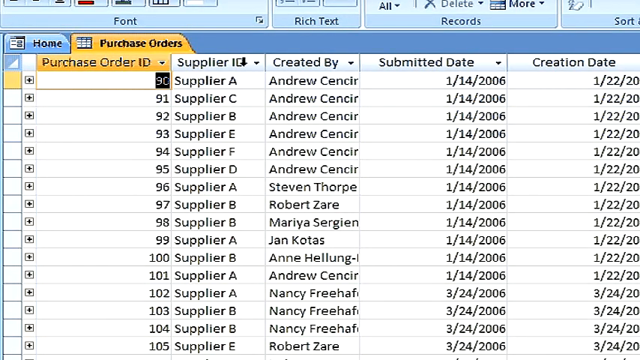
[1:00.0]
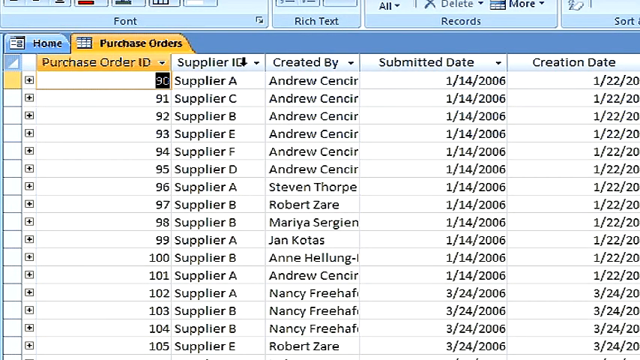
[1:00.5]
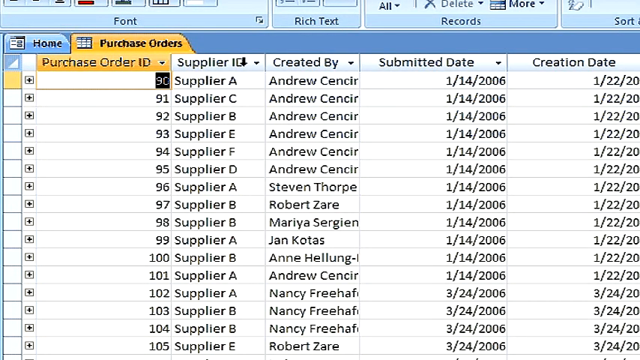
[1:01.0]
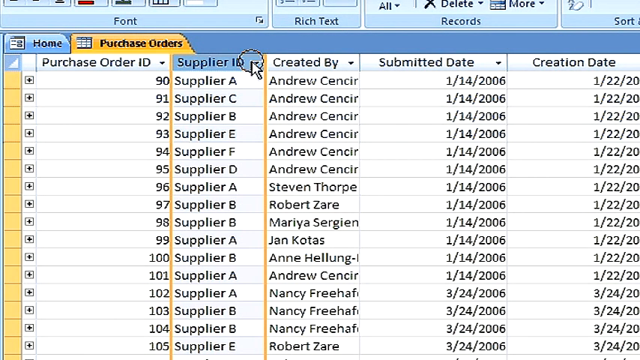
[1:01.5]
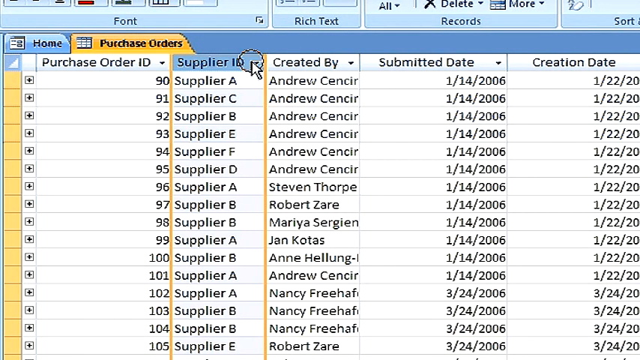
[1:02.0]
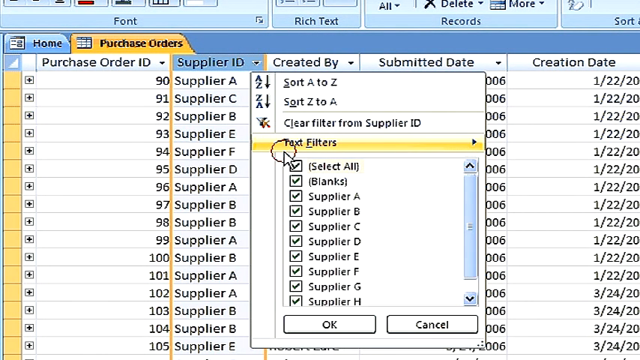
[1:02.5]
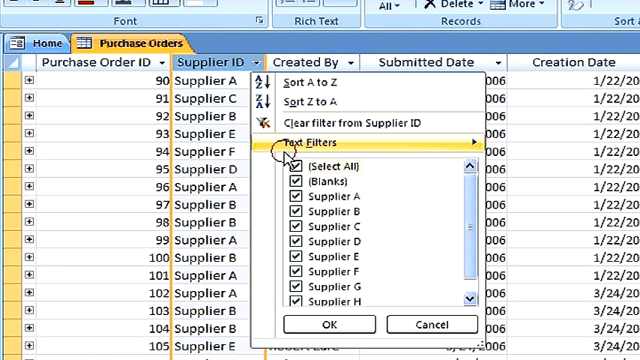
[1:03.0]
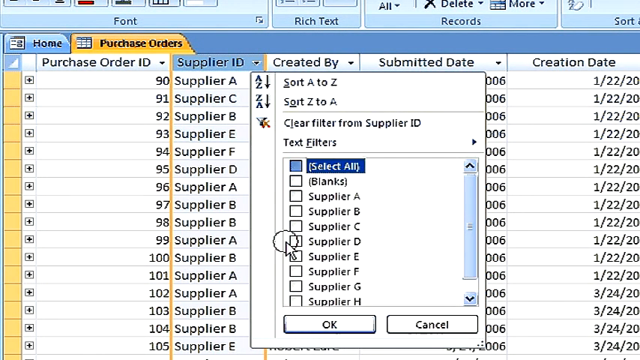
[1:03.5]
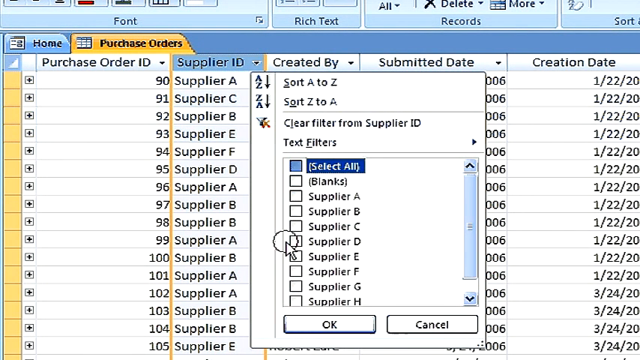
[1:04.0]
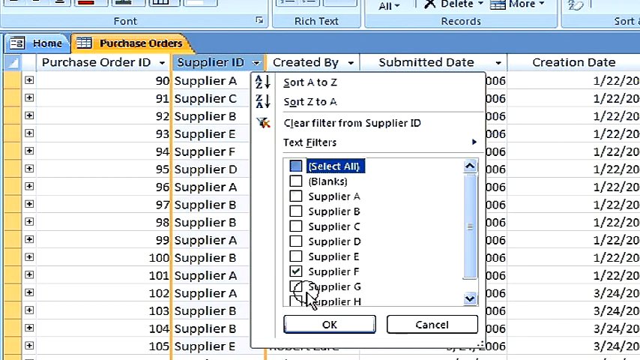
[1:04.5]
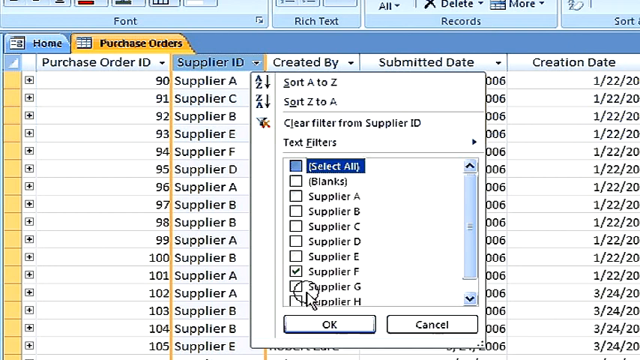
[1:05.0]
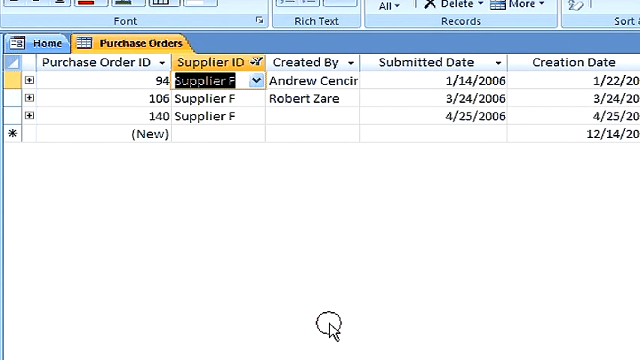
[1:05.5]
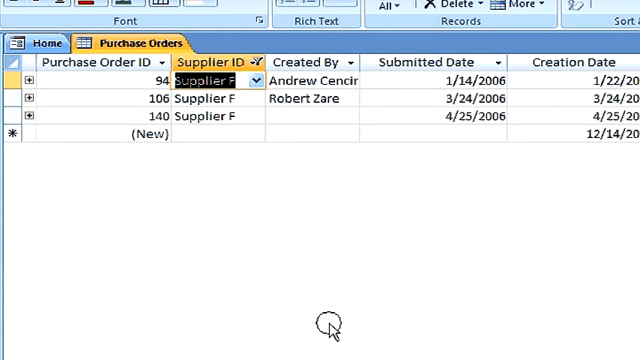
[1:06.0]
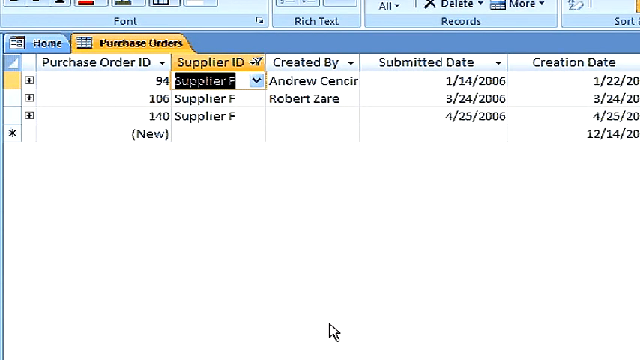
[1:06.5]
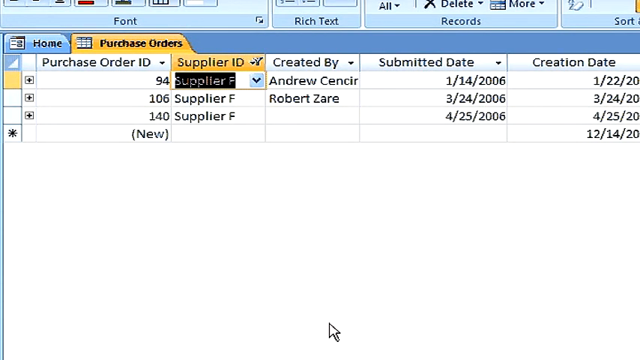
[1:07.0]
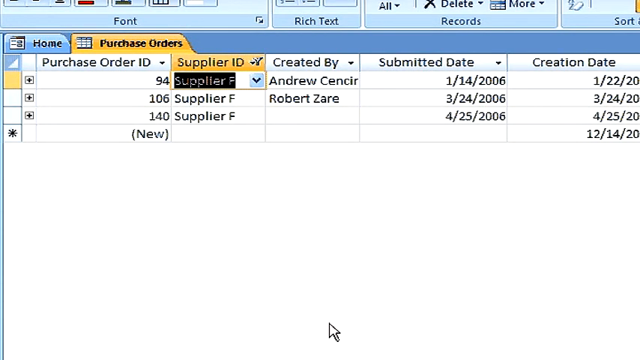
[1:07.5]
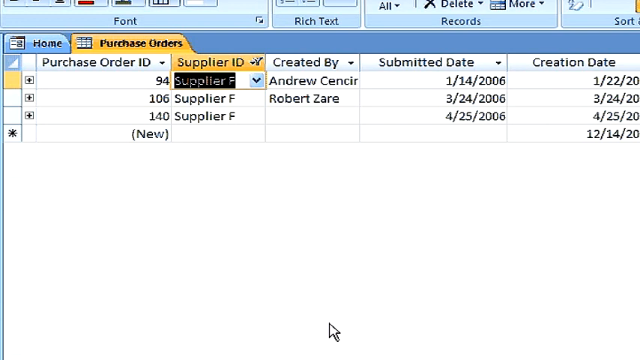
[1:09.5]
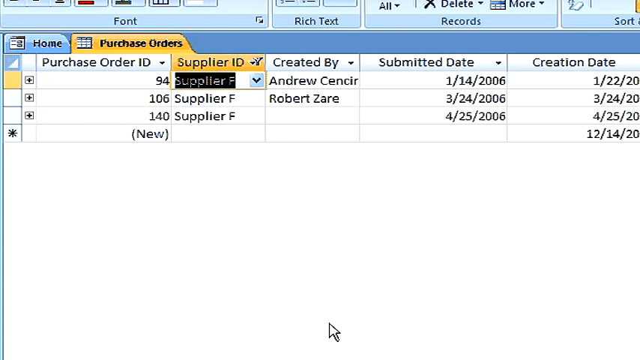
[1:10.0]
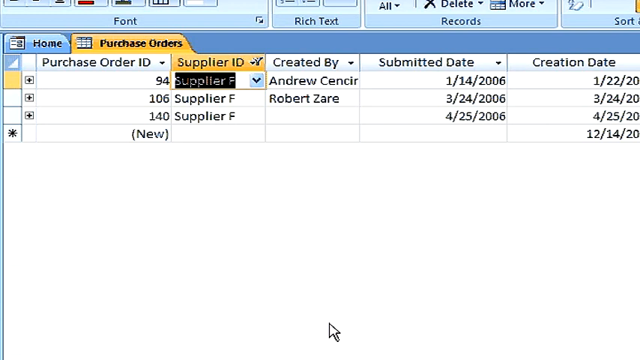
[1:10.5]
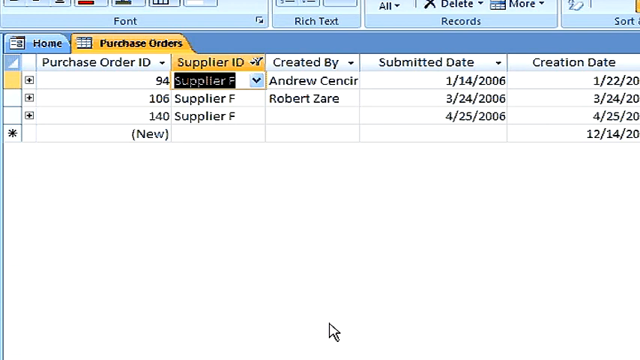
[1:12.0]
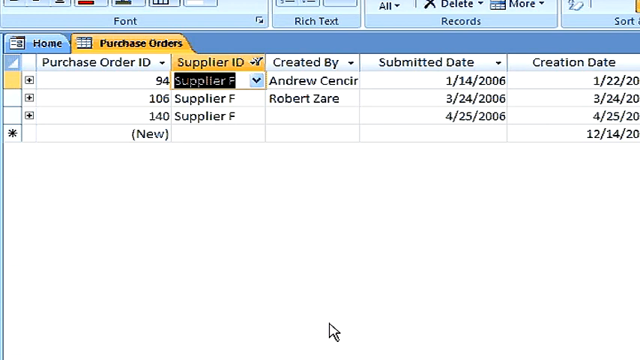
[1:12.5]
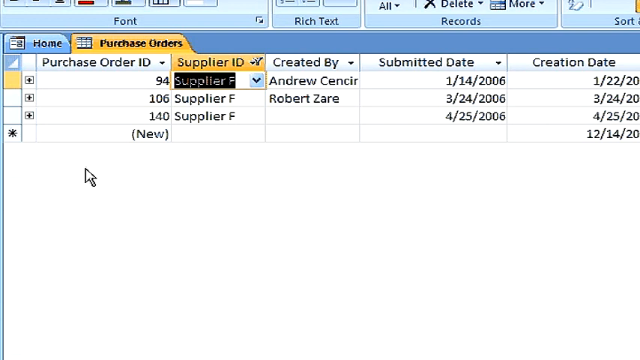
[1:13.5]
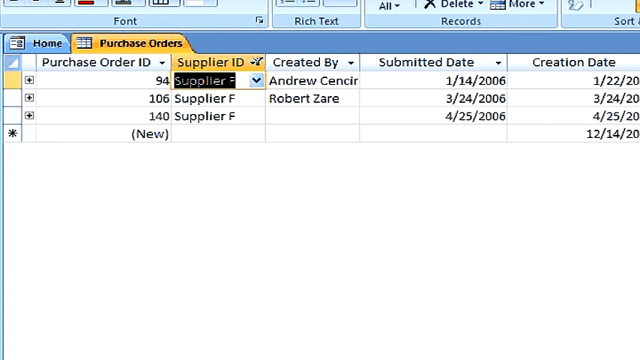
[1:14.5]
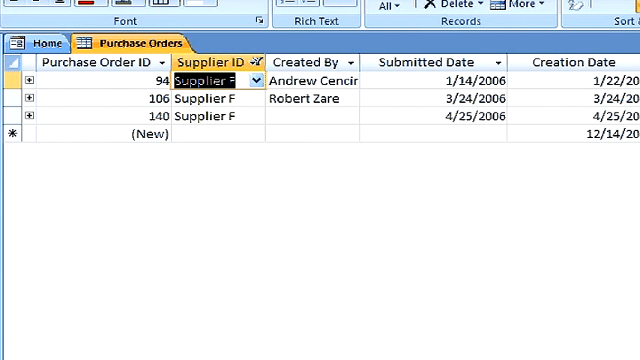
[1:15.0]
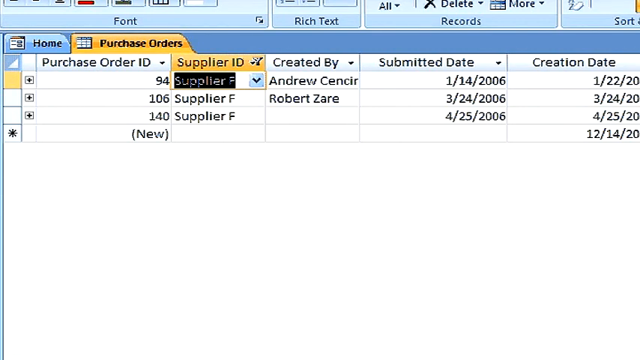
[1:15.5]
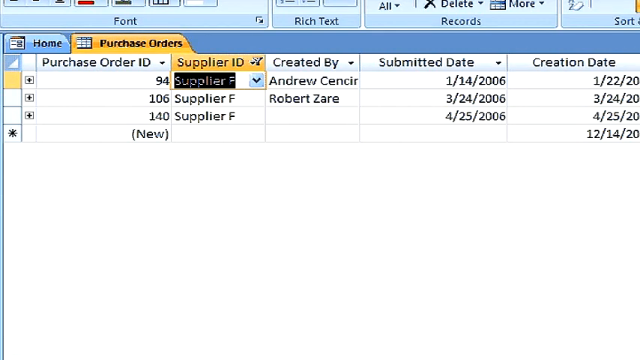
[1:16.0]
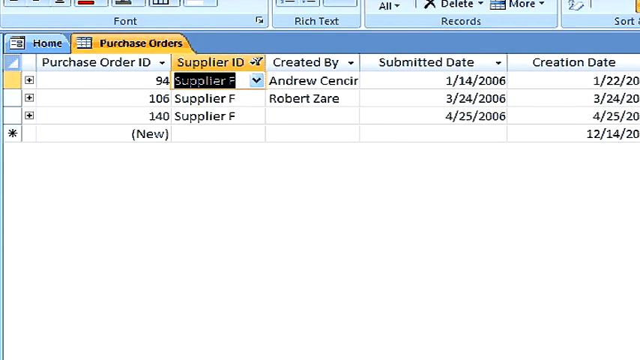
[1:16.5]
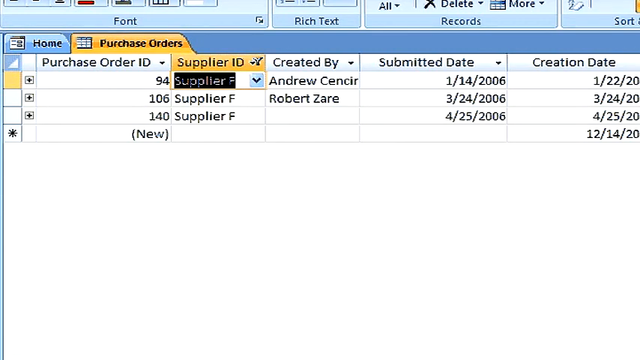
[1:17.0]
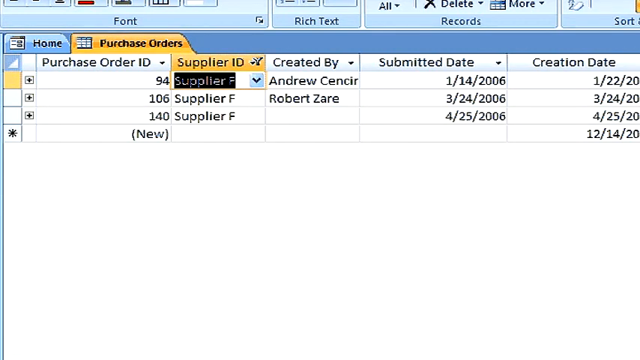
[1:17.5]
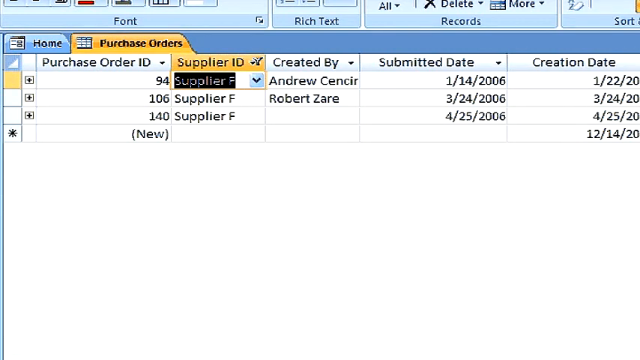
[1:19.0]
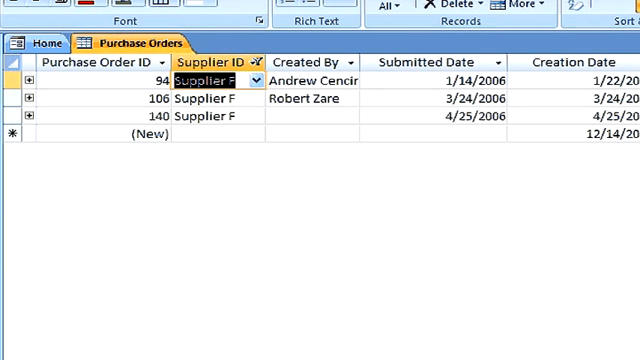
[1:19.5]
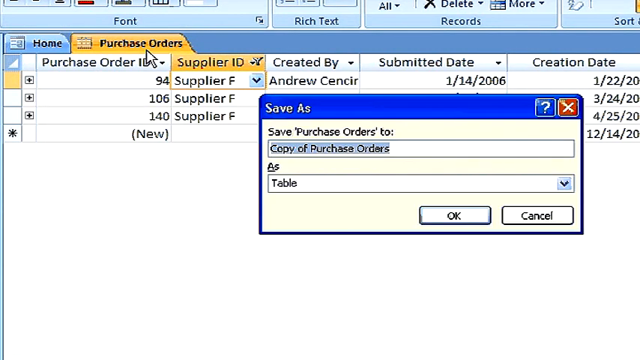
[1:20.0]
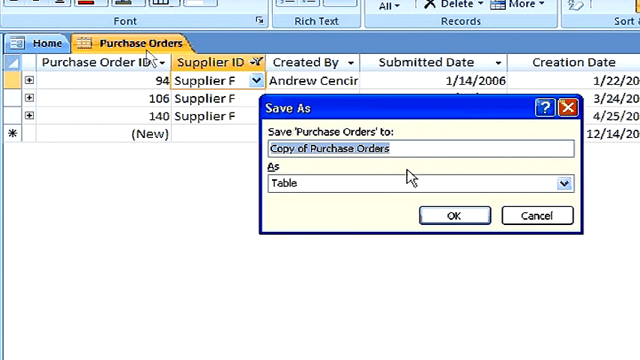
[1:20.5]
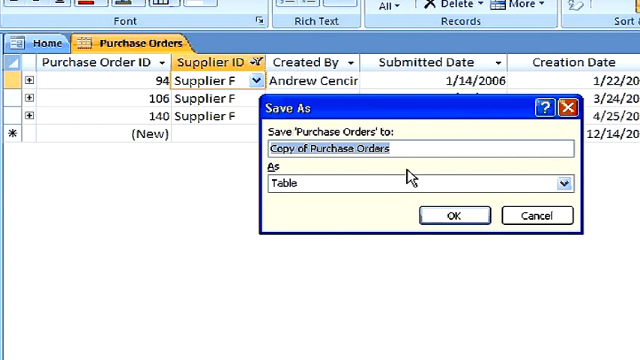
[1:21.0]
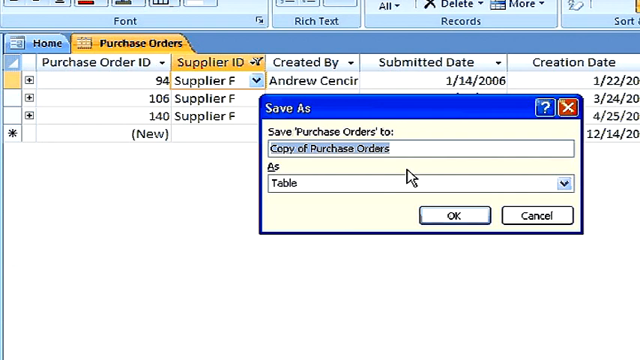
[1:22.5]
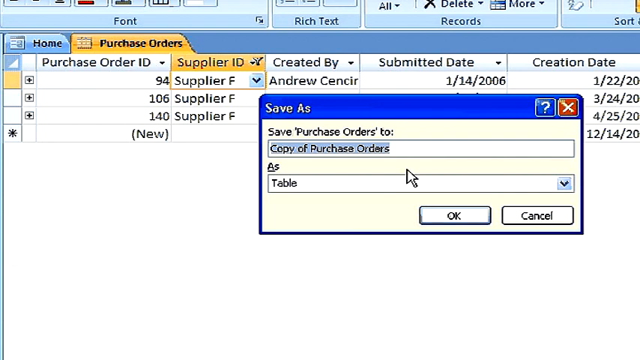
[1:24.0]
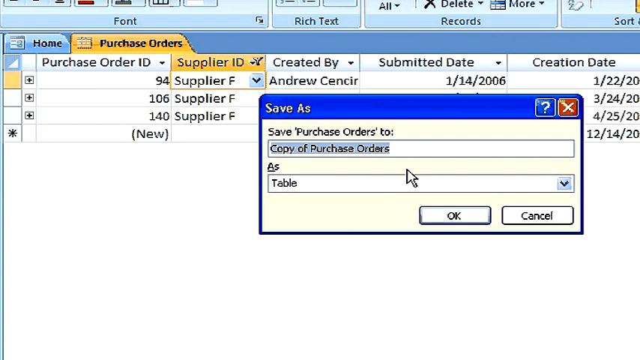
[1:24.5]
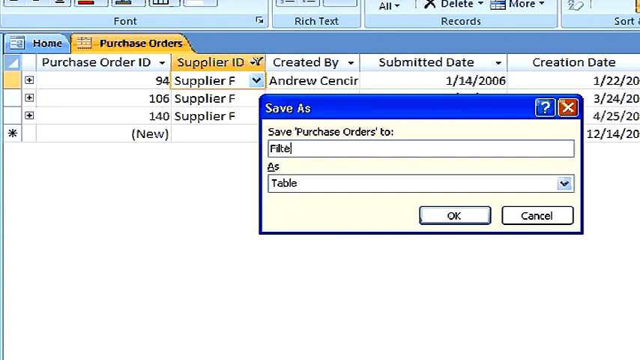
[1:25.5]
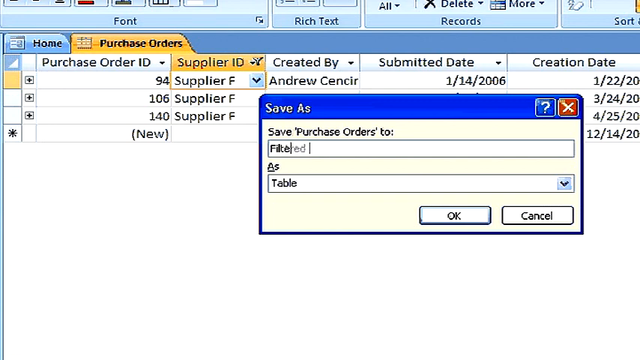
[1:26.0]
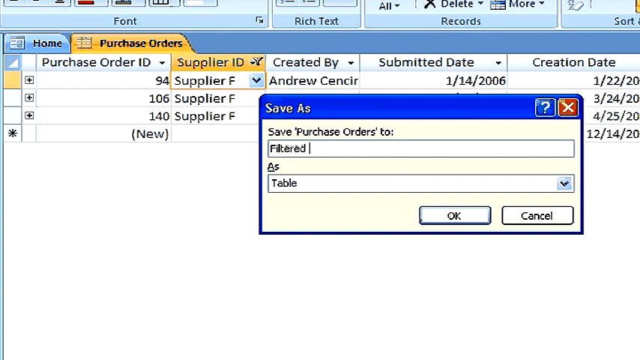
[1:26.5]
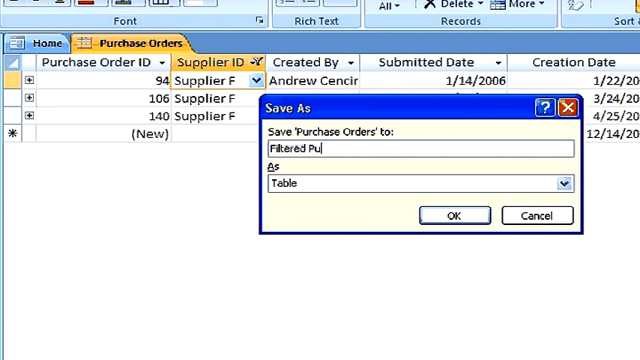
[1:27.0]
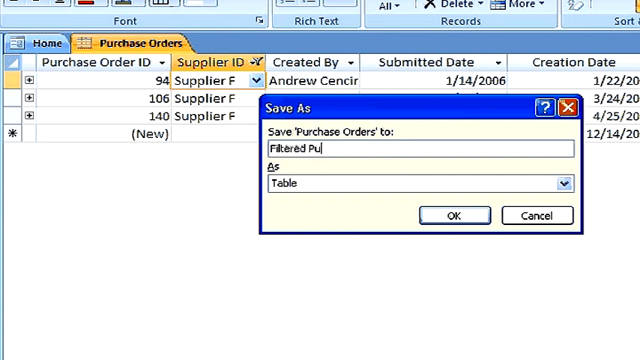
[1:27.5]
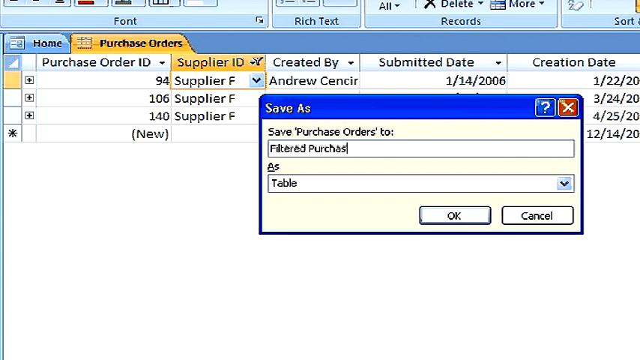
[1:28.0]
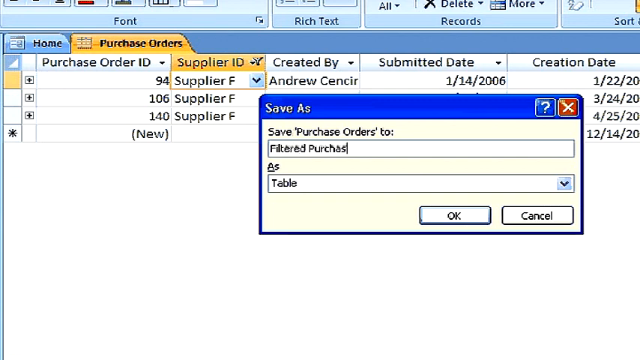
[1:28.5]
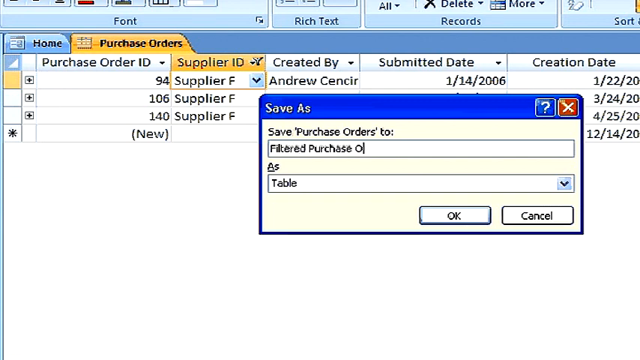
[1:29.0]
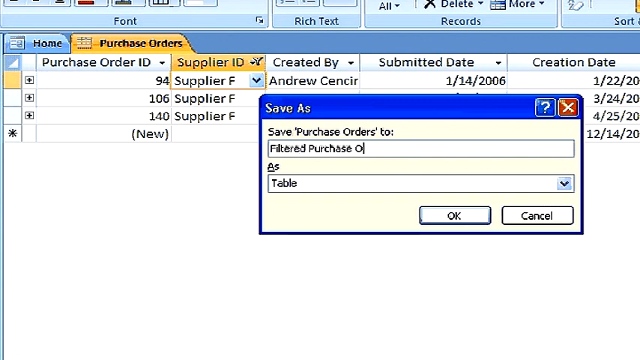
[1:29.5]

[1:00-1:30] The purchase orders section of Microsoft Access shows a series of logged transactions numbered from 90 through 105. The suppliers are labeled supplier A, B, C, through to supplier F, and the transactions were created by Andrew Cencir, Jan Kotas, Maria Sergien, Nancy Freehafen, and Robert Zare. The dates all seem to fall between January and March 2006. The man selects different columns and selects and deselects particular suppliers, filtering the database. He then saves it as a copy of purchase orders, as a table, changing the name to "filtered purchase orders".